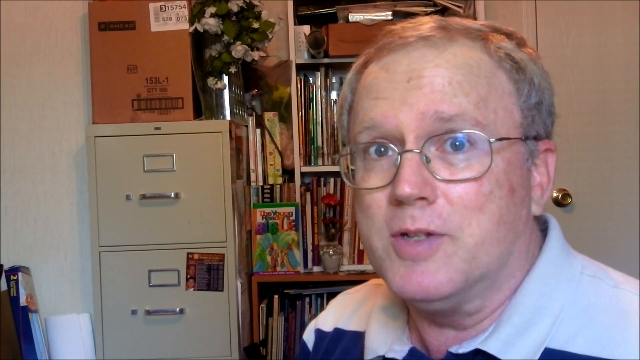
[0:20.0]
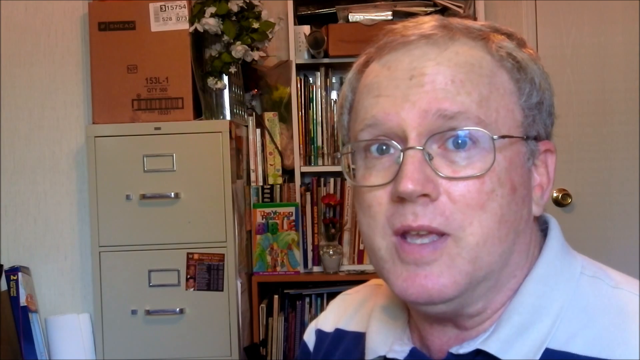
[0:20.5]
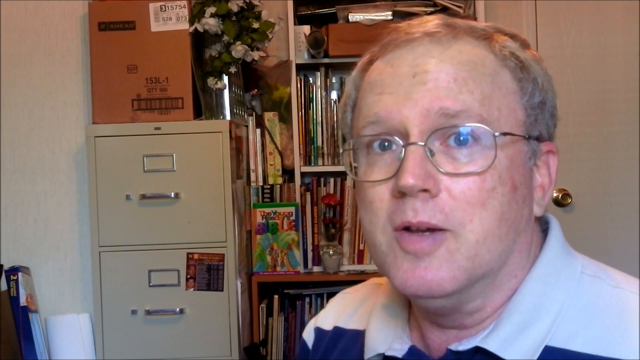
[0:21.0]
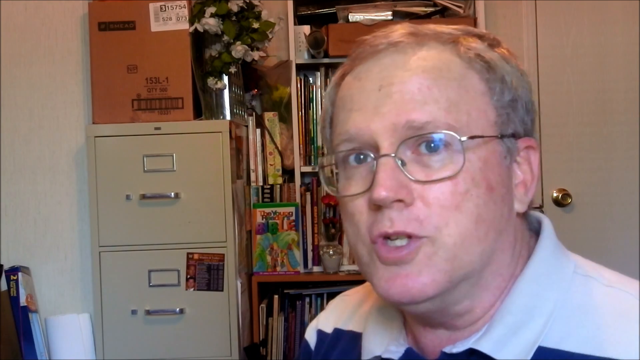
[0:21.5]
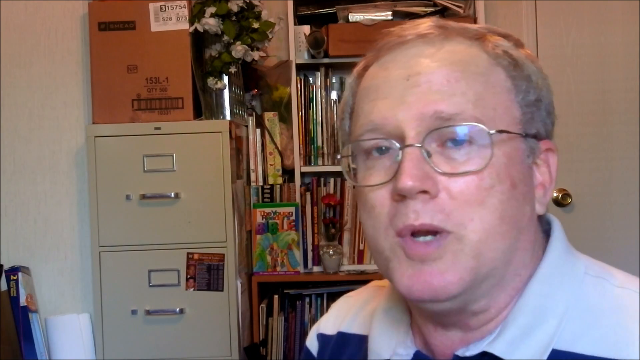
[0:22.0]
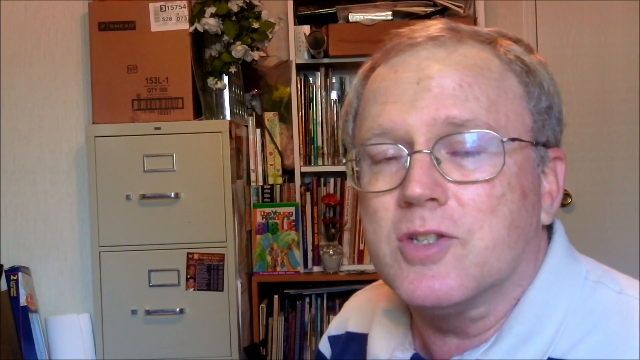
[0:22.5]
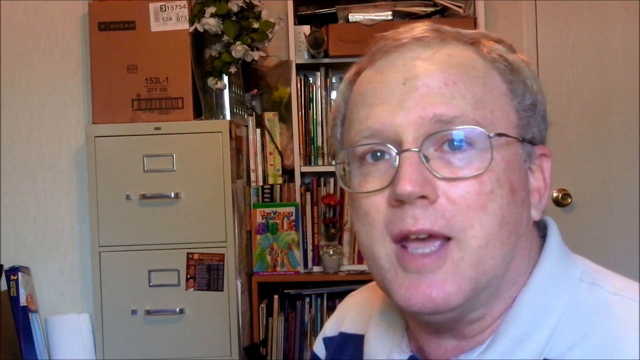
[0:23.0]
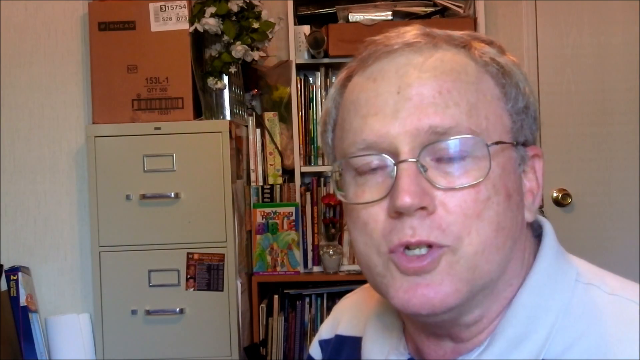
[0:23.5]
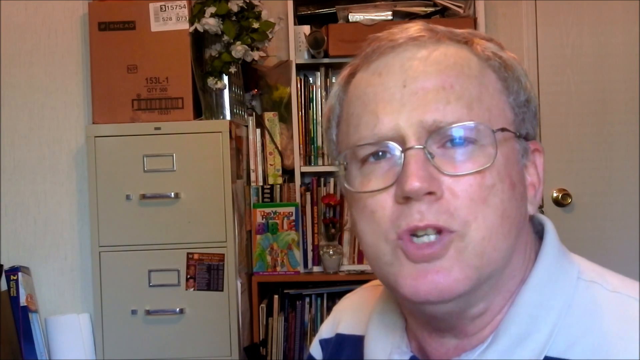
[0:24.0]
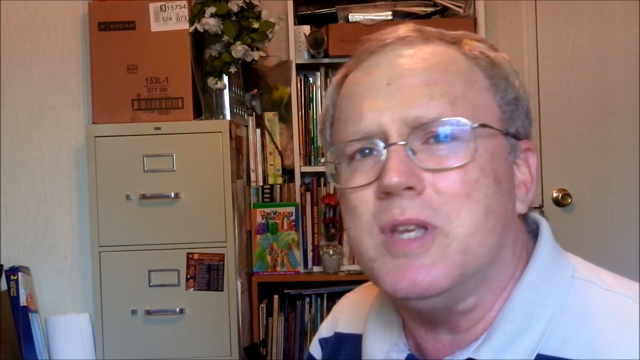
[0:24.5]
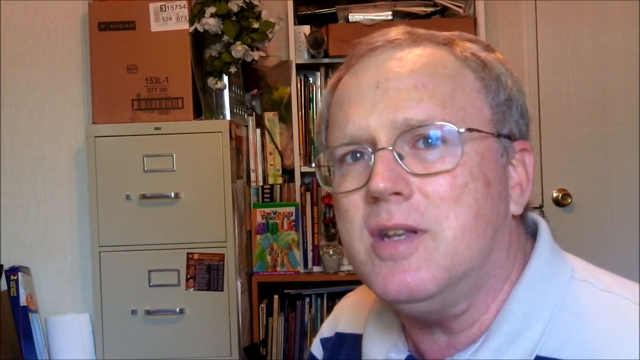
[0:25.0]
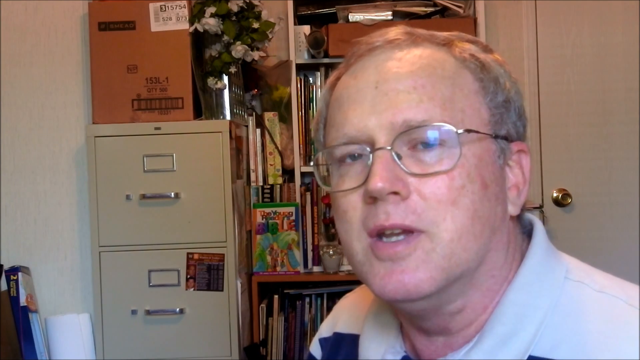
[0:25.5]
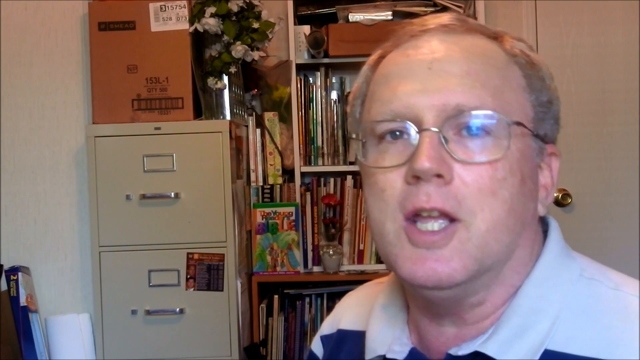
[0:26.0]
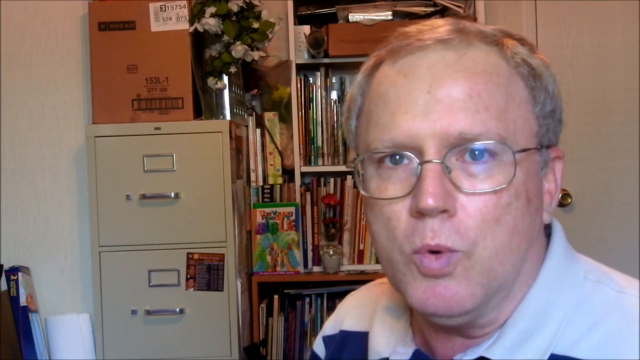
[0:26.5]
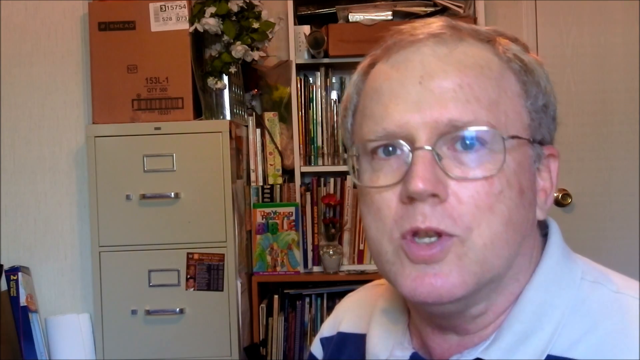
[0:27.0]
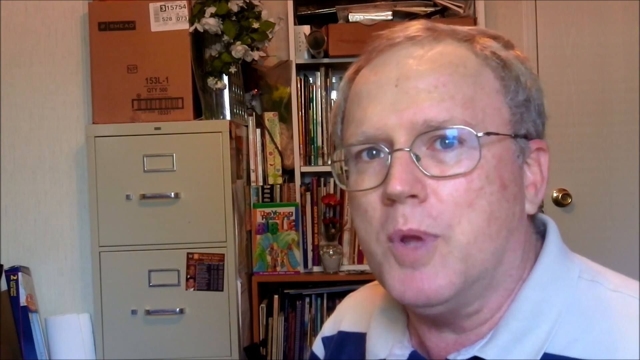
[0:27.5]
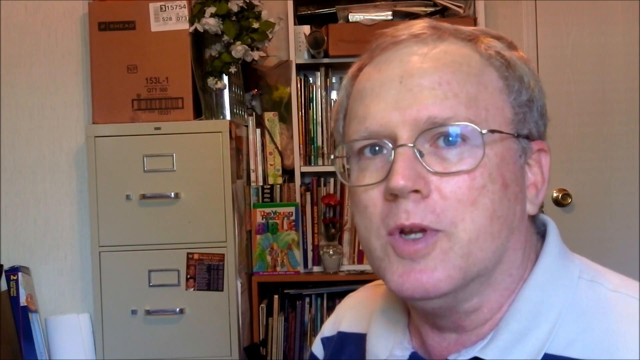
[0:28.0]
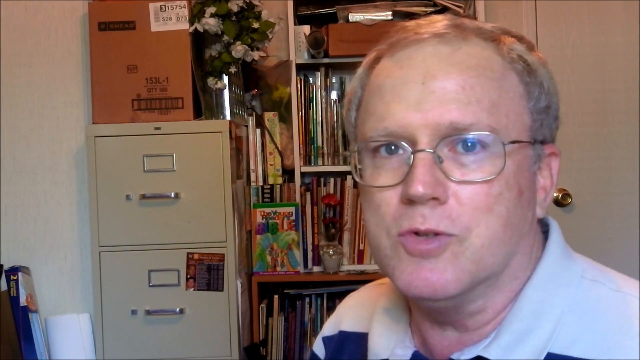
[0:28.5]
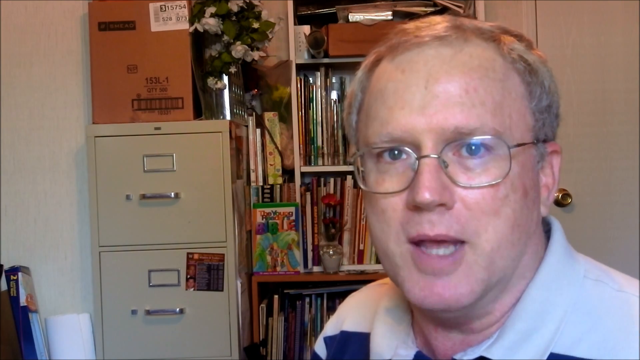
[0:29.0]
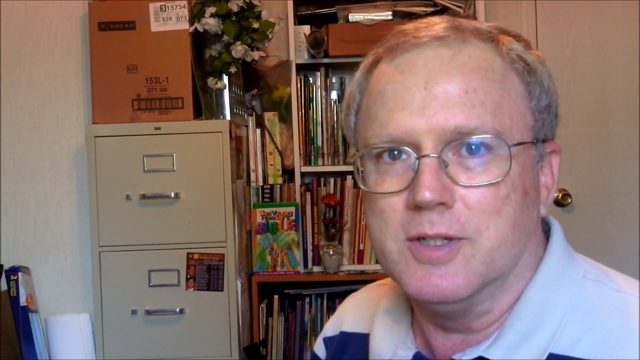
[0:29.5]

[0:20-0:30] A man in his 60s speaks into the camera. He has big blue eyes, some light age spots on his skin, and wire-rimmed glasses. Behind him is a messy bookshelf with skewed books, and its top shelf appears to be filled with junk. His face is slightly blurry from the camera angle, and there is a slight glare on his glasses from the overhead lighting. He nods slightly as he speaks but does not move his body, remaining seated. His eyebrows change shape slightly as he emphasizes his words, and he appears engrossed in what he is saying. His eyes appear not to move, looking directly at the viewer and staying relatively focused, while the muscles of his forehead, chin and jaw work as he speaks.